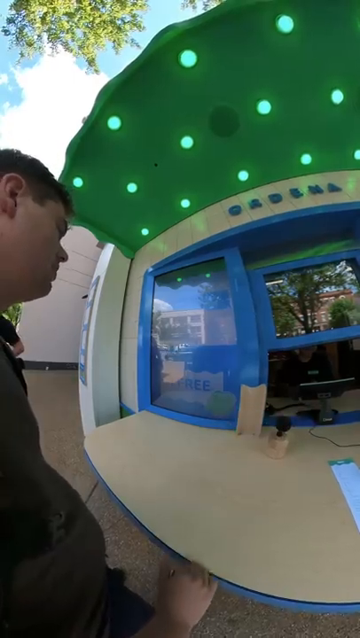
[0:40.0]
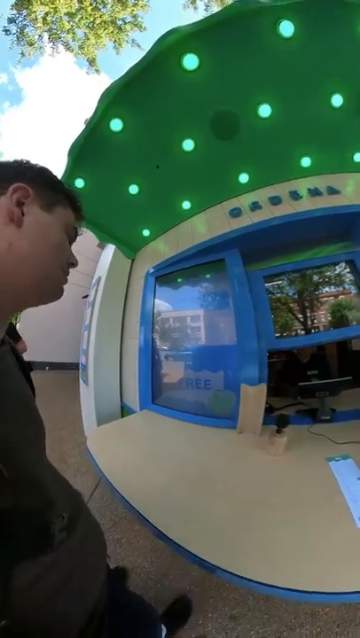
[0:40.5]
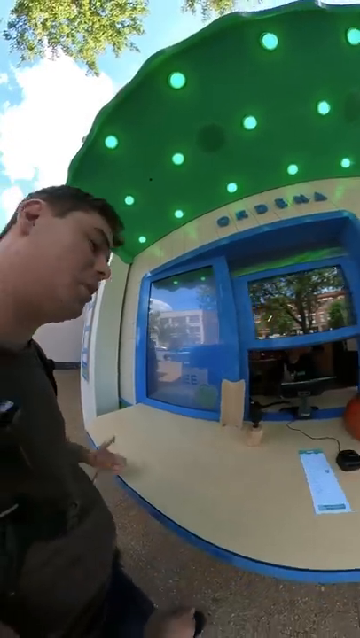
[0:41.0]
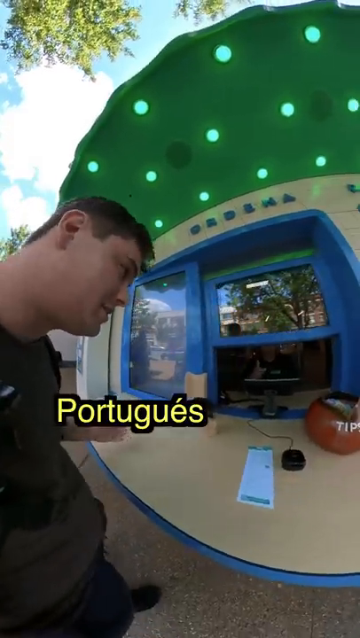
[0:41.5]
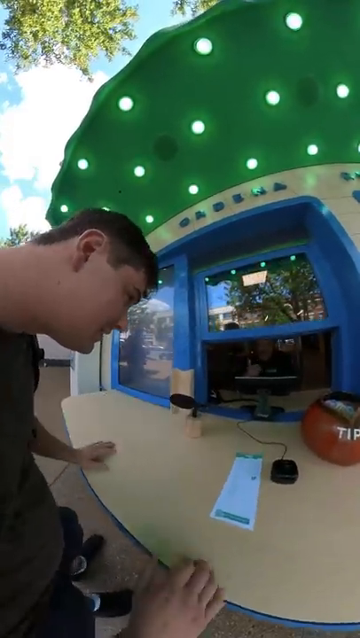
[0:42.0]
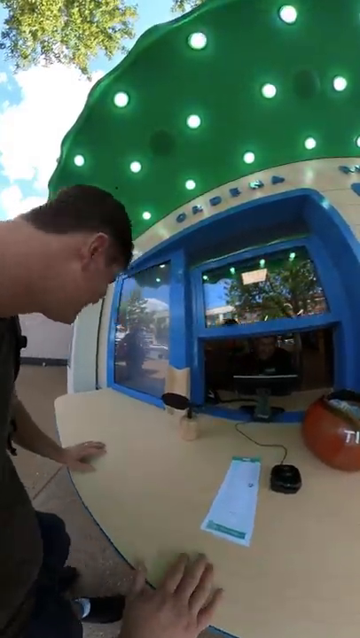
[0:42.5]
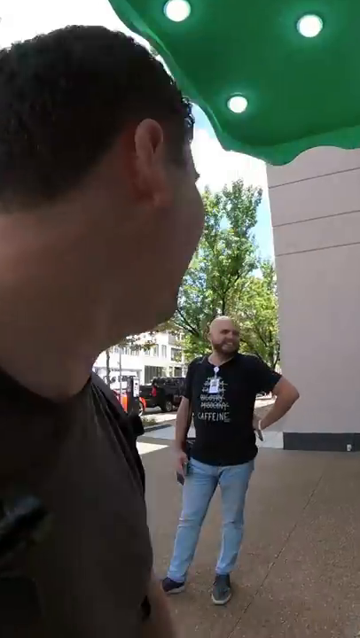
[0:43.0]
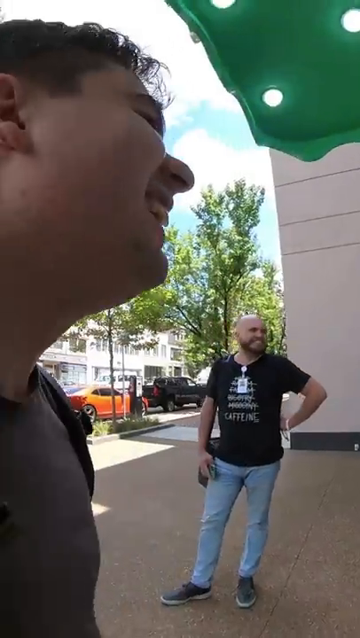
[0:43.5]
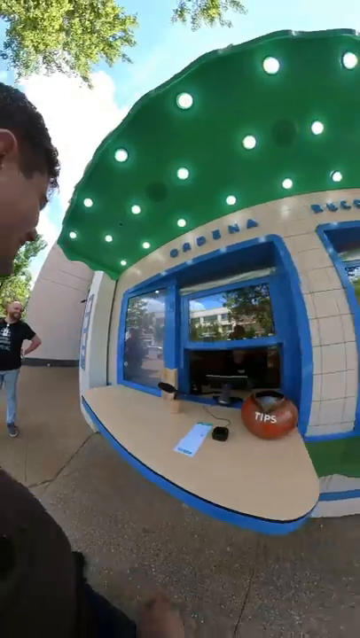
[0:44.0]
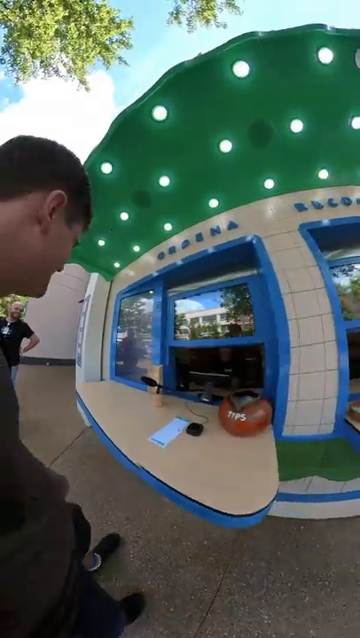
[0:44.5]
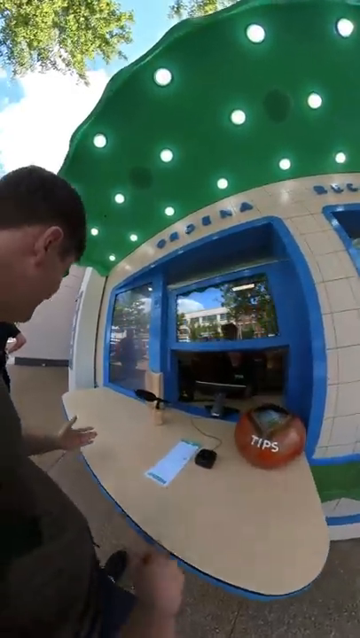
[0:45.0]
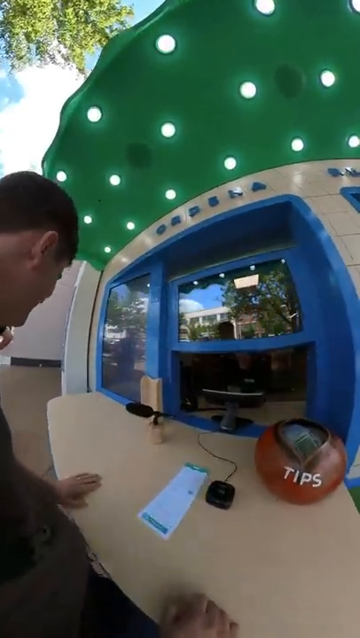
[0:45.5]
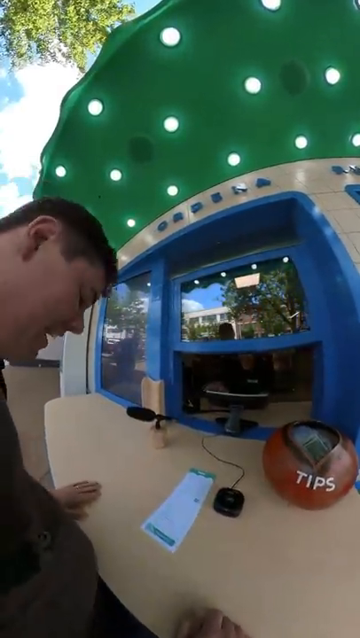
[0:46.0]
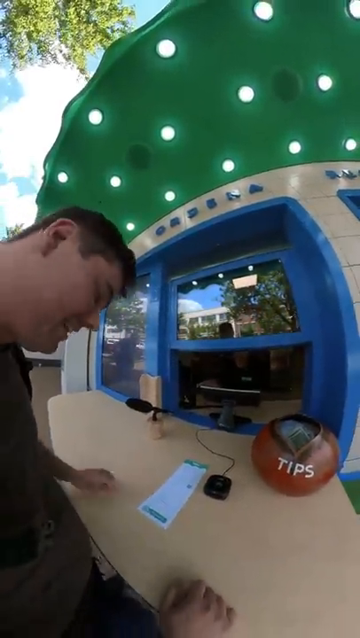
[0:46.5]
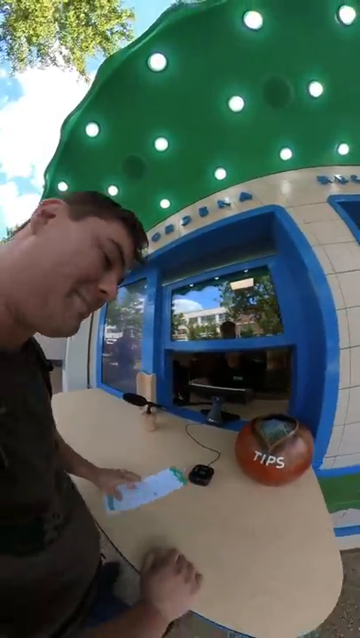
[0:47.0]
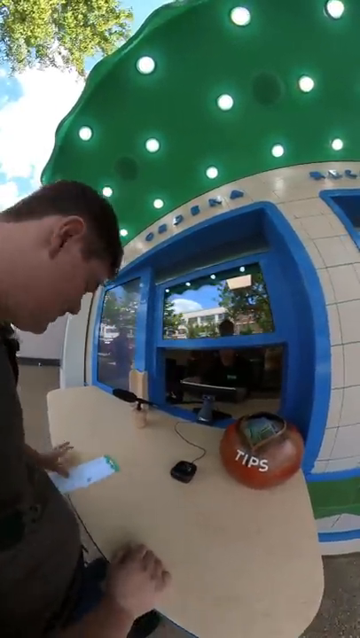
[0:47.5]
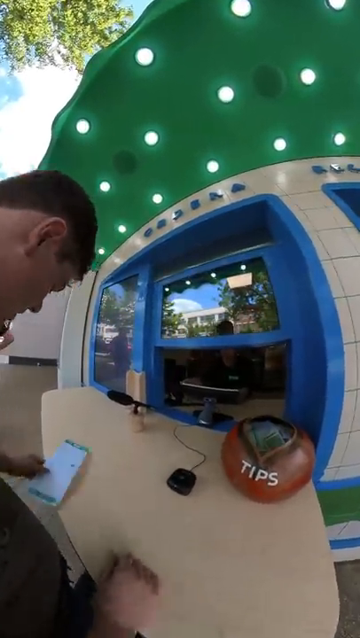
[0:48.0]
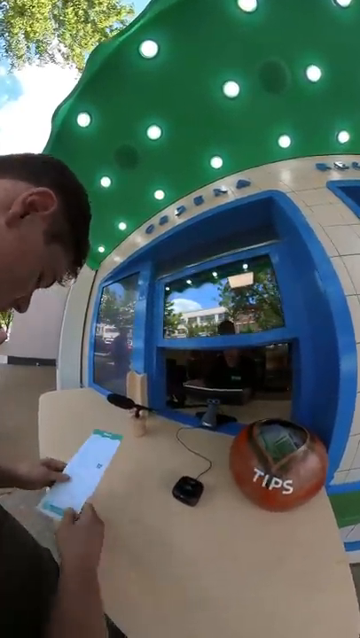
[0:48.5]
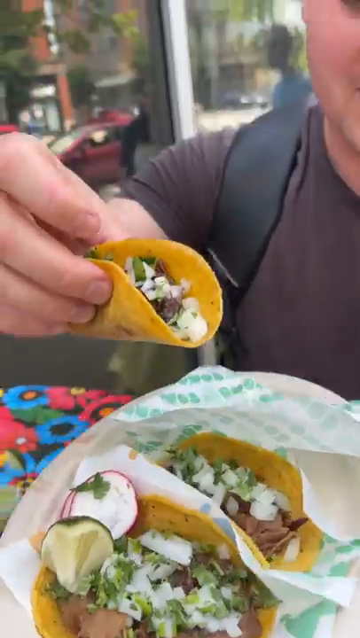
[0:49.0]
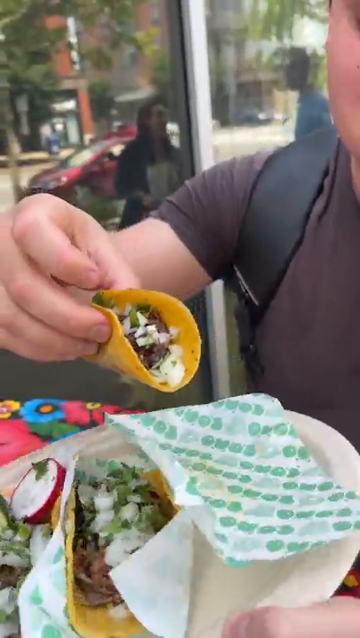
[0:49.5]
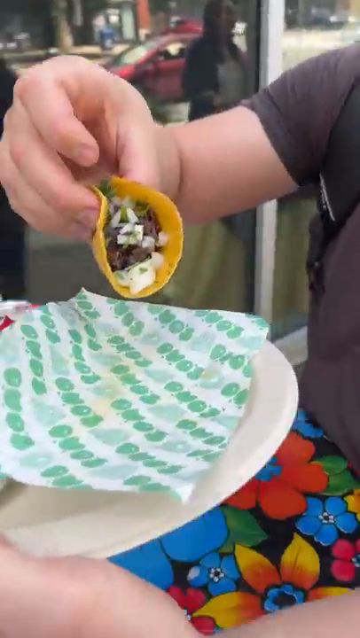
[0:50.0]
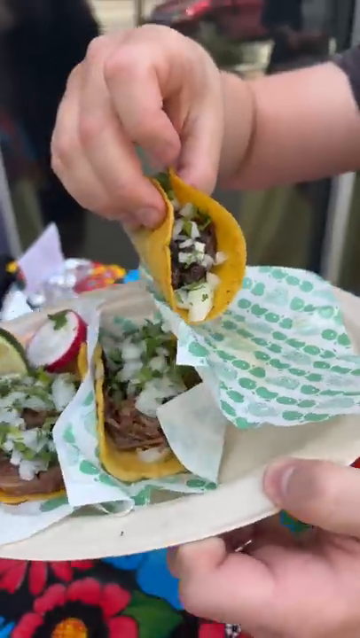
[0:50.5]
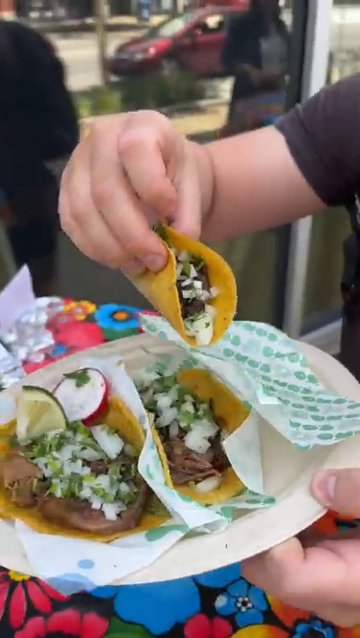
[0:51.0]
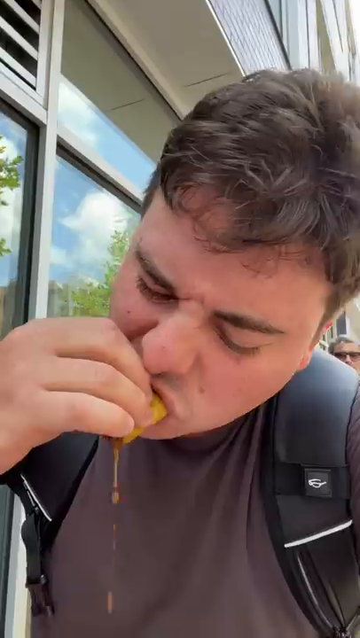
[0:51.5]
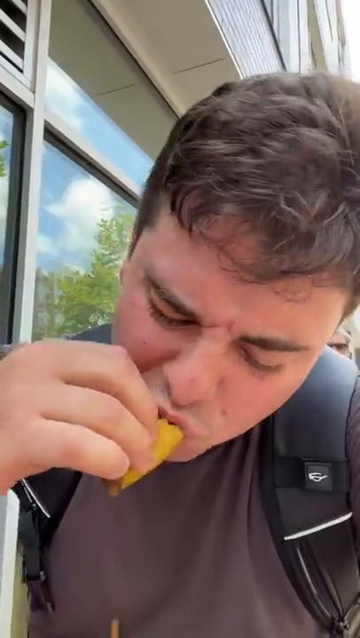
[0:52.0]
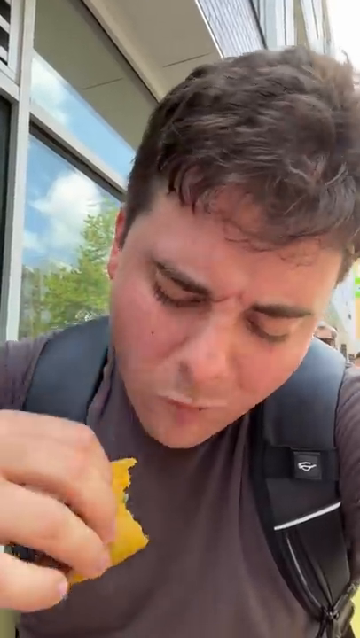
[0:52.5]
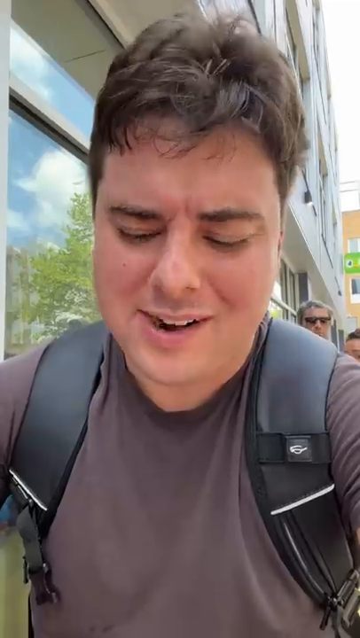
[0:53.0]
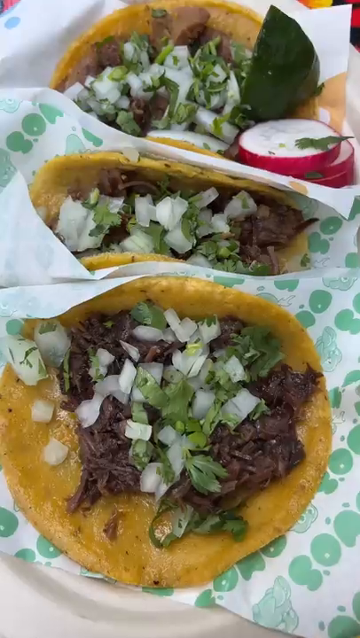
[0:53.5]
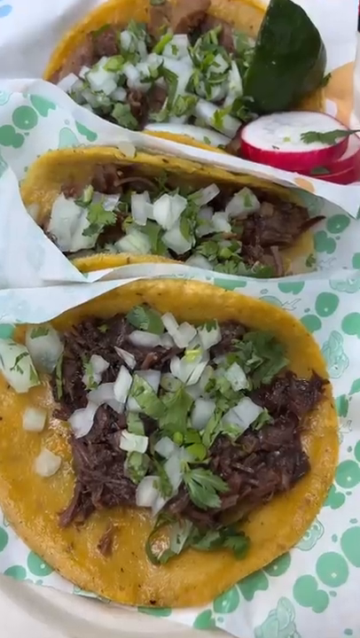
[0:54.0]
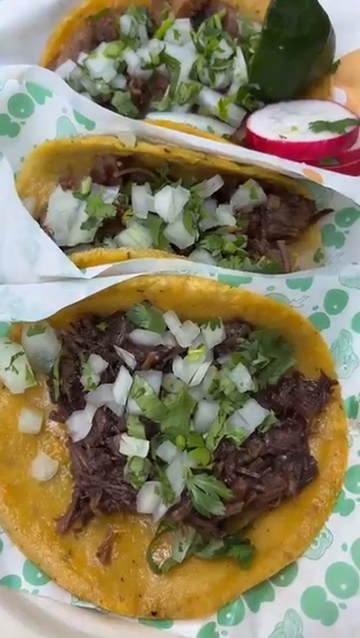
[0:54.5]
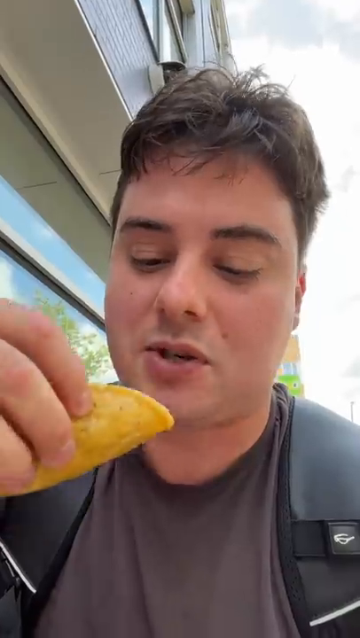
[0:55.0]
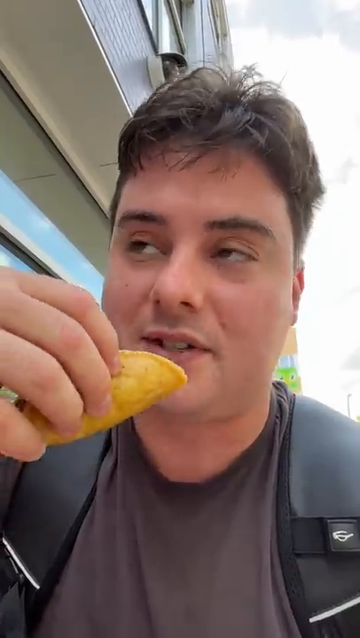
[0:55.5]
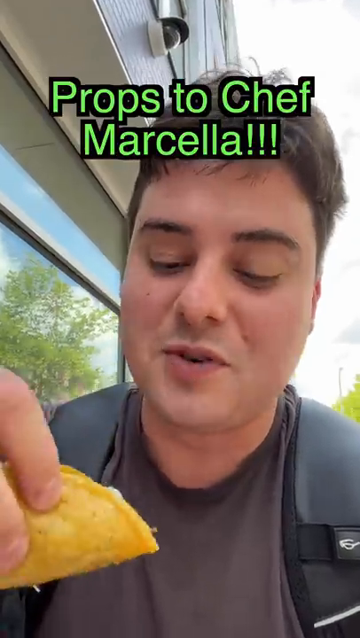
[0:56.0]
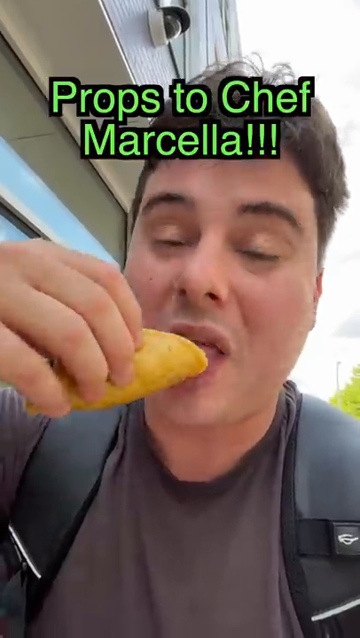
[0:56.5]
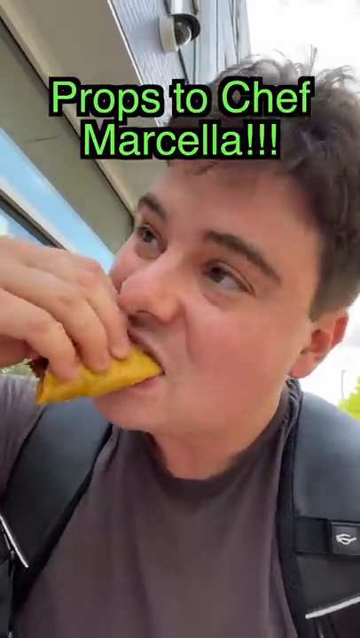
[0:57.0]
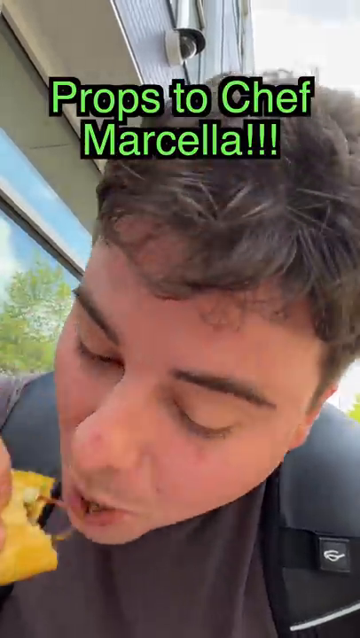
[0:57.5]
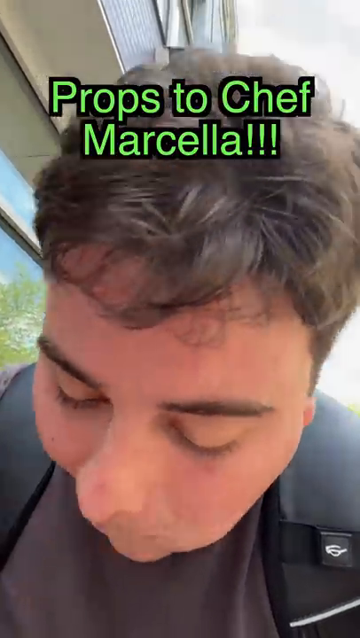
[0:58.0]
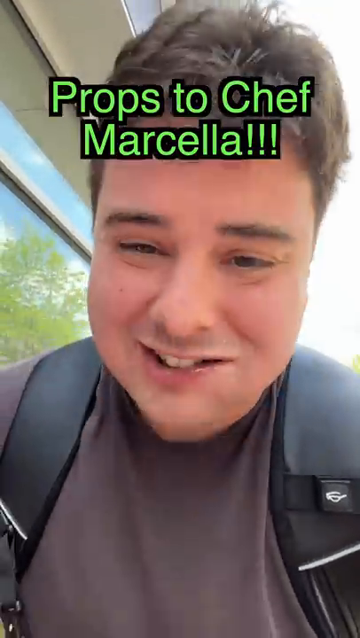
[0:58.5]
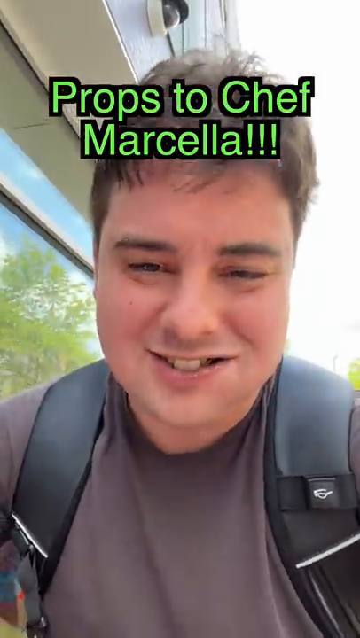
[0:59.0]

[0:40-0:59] Looking more closely, somebody appears to be behind the window, seemingly taking an order. The video moves back and forth between this and the man, maybe finishing up his order. The man then has a taco and eats it, with props given to Chef Marcella. There are three tacos, which look good. A friend or some other person is off to the side, smiling. At the end, he is eating the tacos.